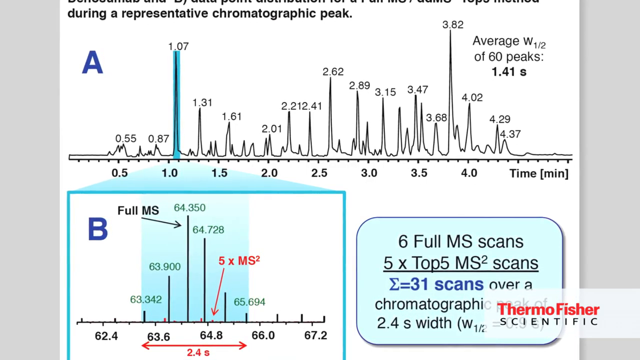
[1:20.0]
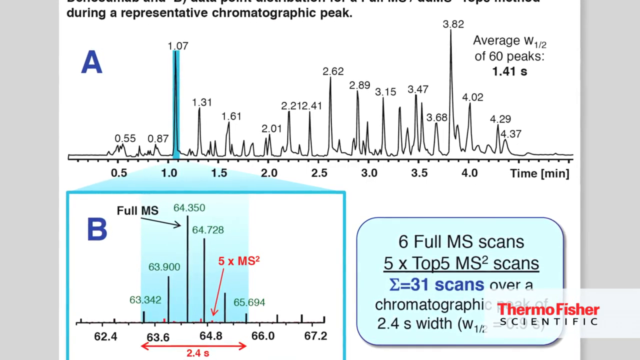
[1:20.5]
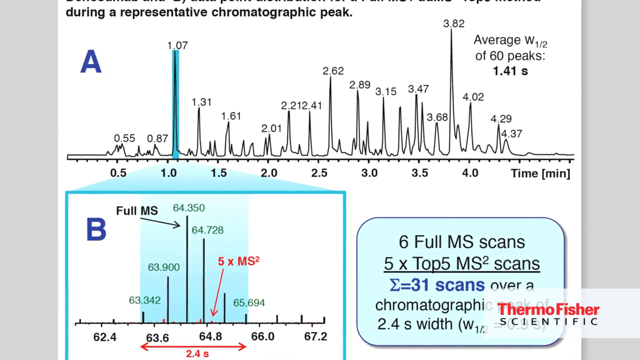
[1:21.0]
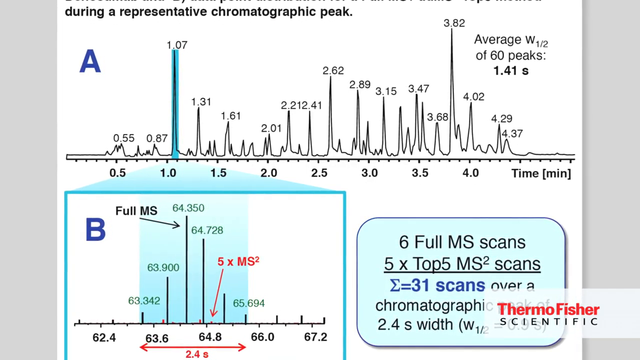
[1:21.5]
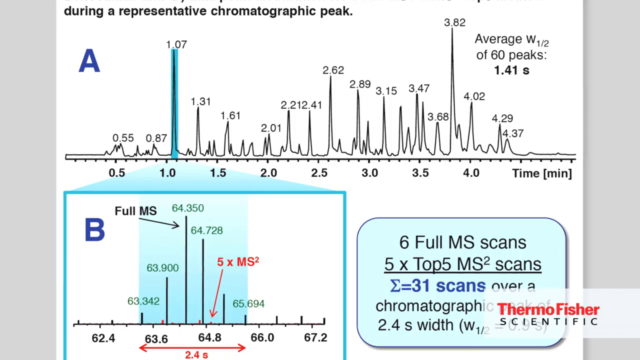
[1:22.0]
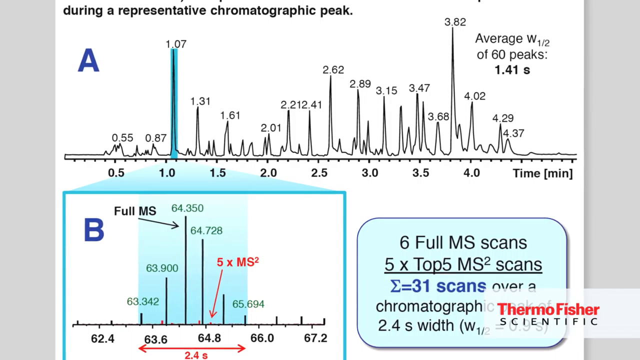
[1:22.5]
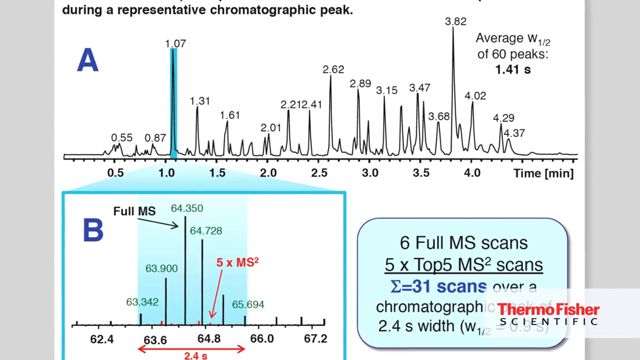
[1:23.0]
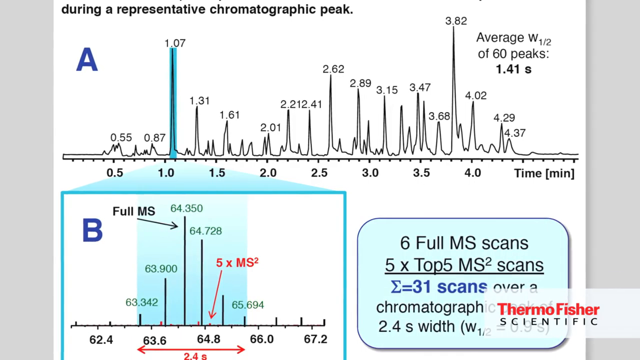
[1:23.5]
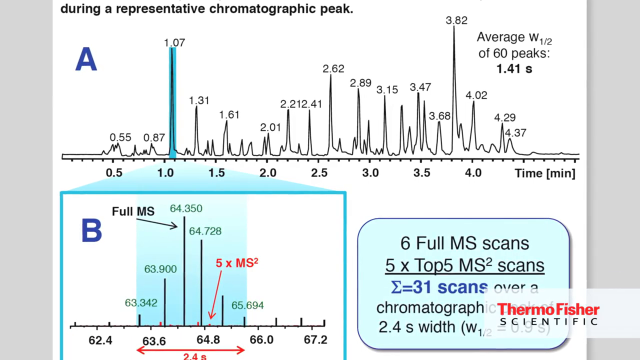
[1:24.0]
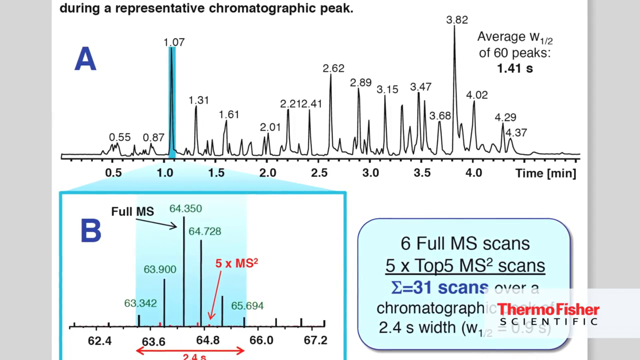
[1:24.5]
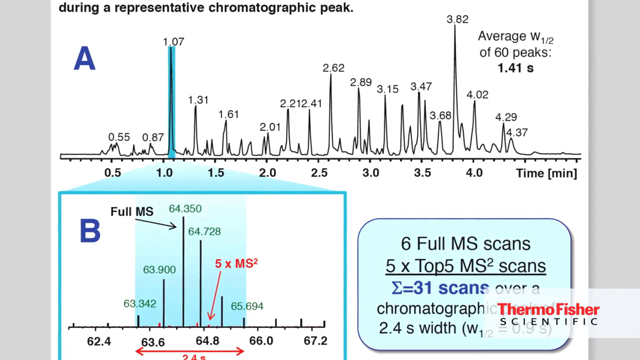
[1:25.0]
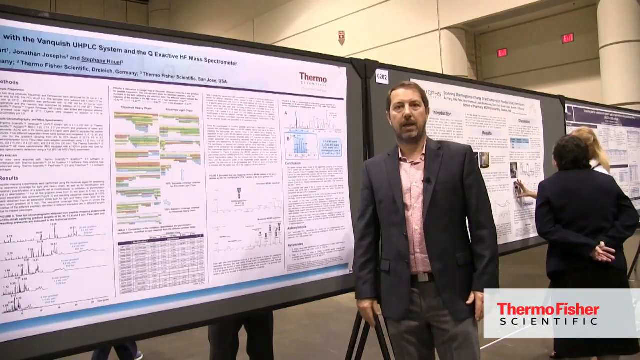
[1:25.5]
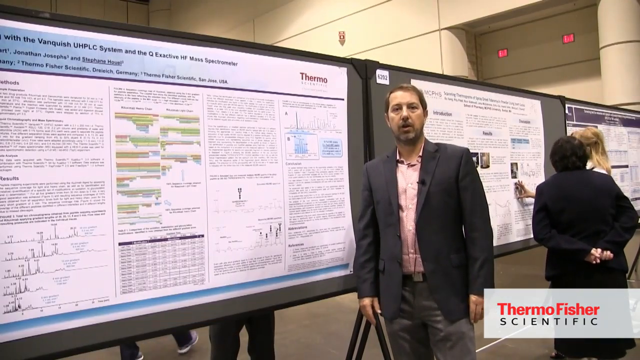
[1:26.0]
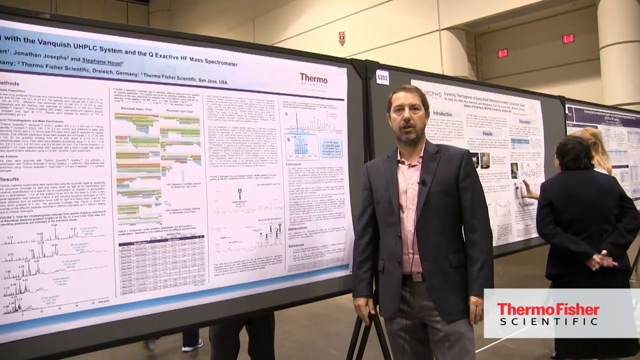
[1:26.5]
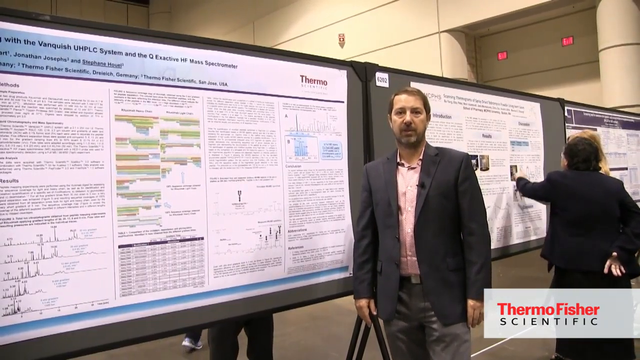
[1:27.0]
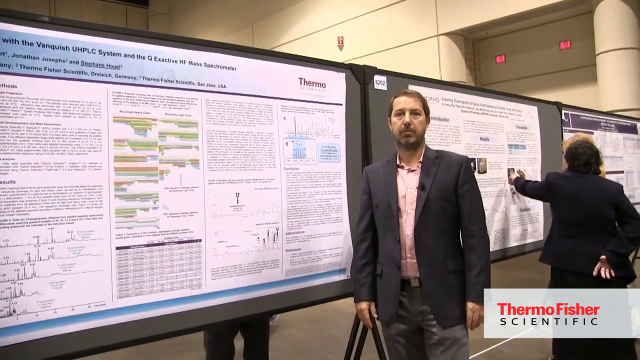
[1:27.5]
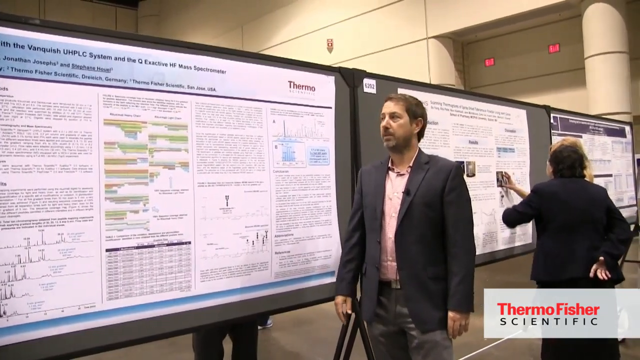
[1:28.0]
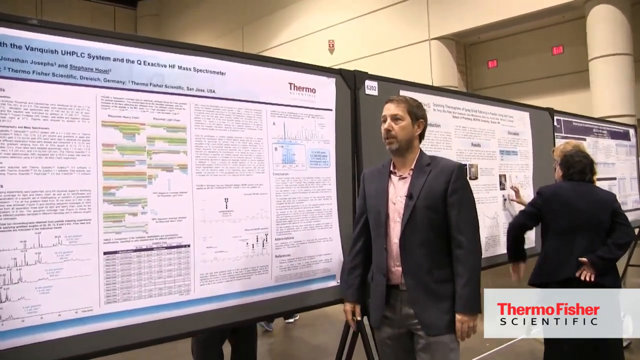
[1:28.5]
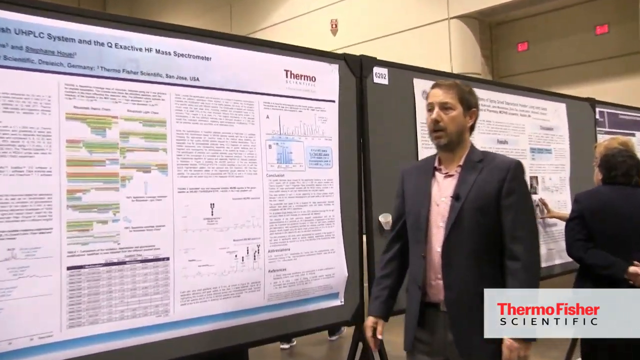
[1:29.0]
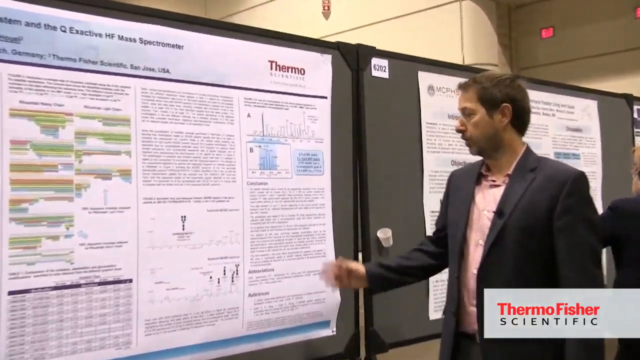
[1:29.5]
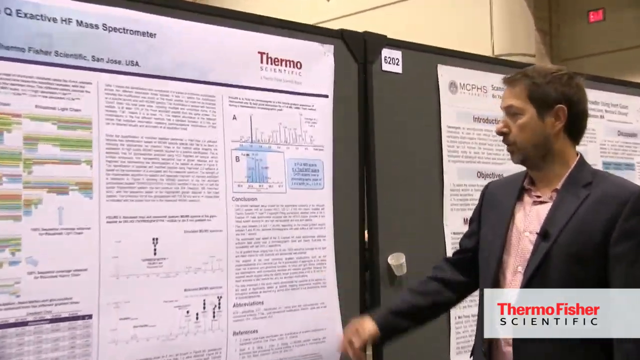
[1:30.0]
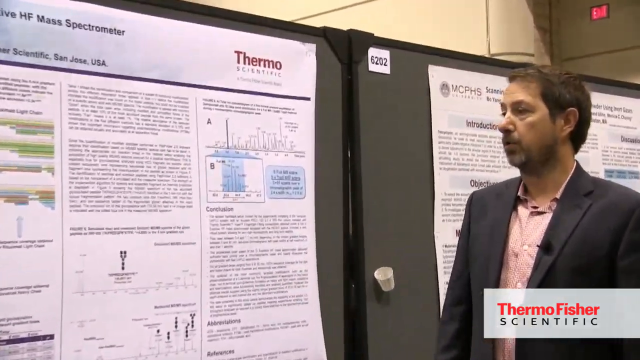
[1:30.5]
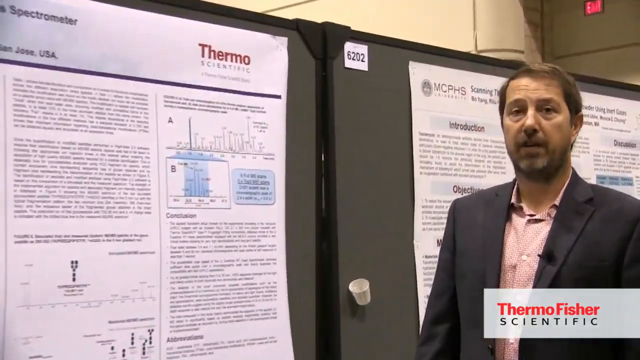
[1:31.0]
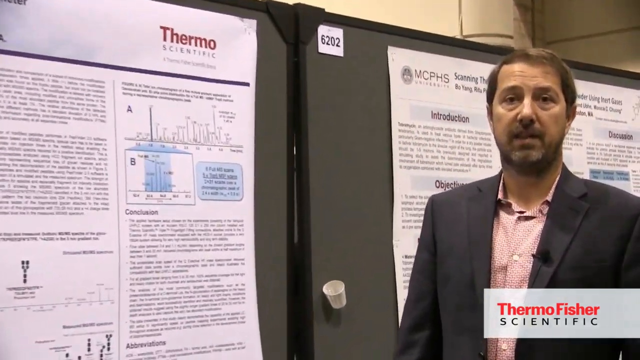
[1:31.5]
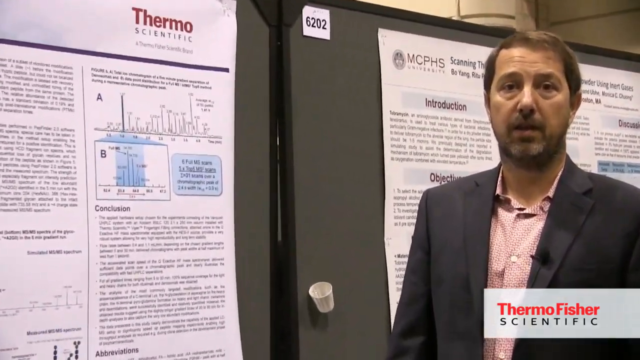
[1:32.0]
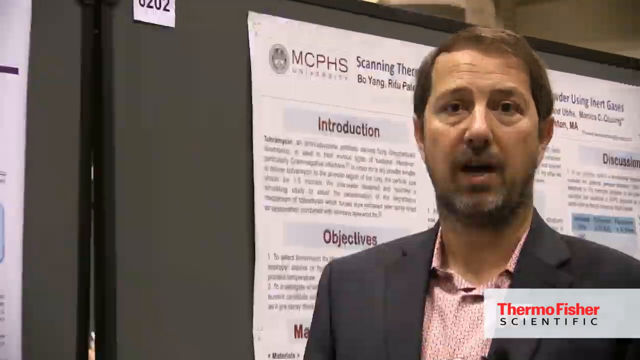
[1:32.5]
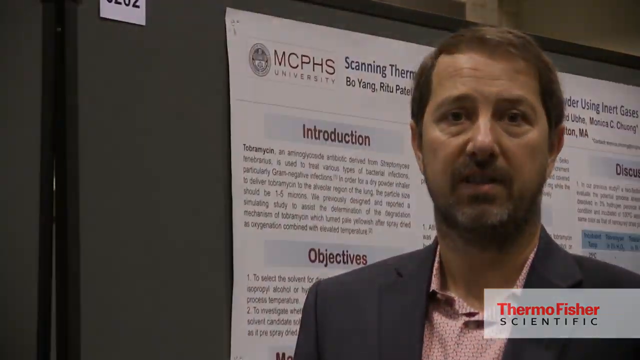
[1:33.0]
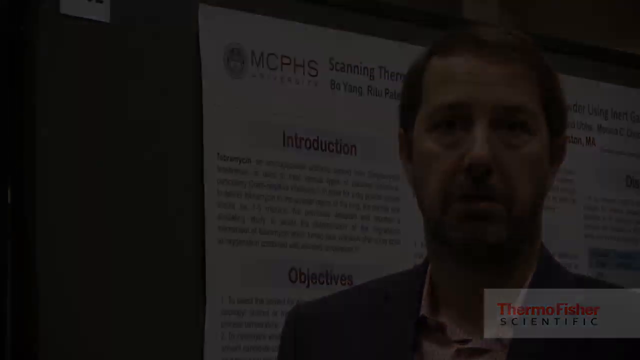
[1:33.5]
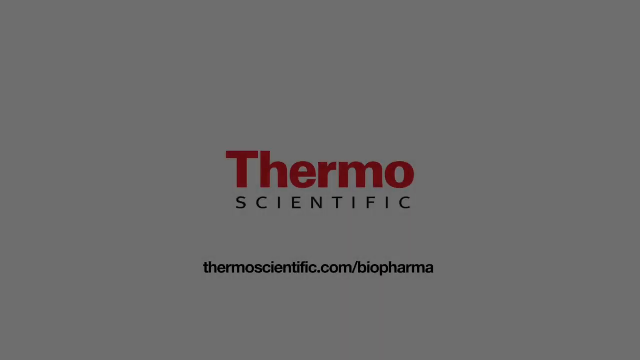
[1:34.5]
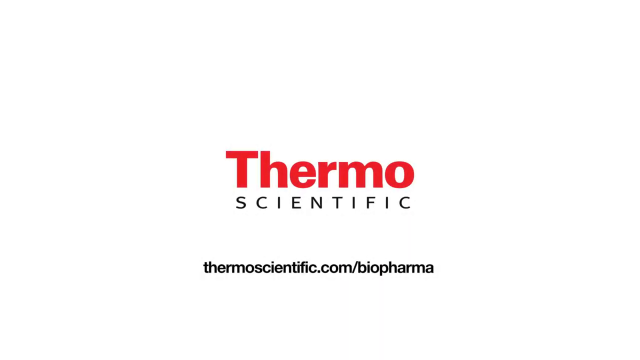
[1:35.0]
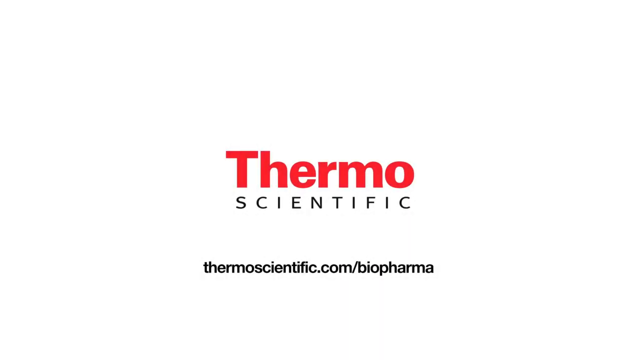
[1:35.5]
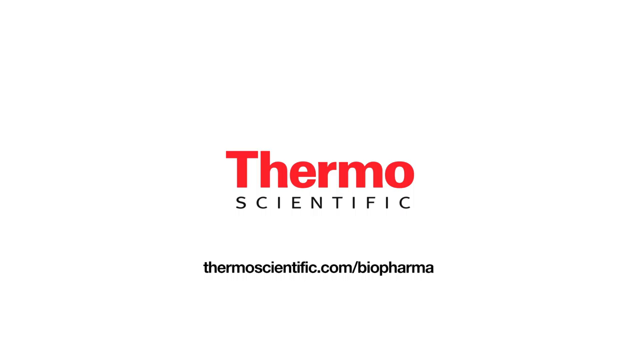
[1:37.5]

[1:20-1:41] A final diagram again shows how A differs from B and the different calculations used to reach the methods. The presenter is pointing out the research, and thermoscientific.com, biopharma appears.